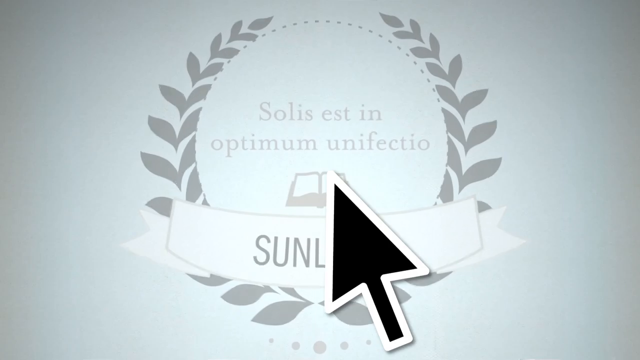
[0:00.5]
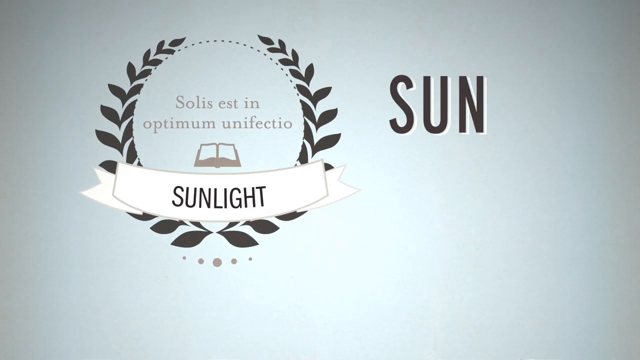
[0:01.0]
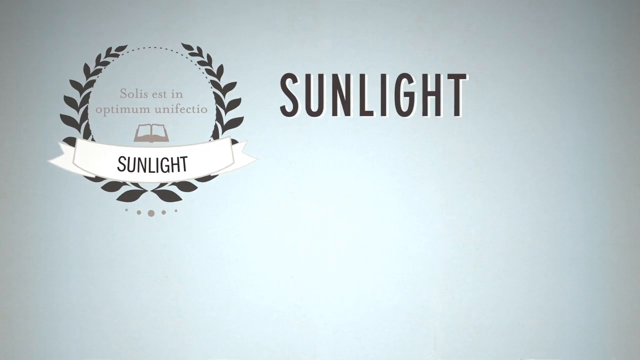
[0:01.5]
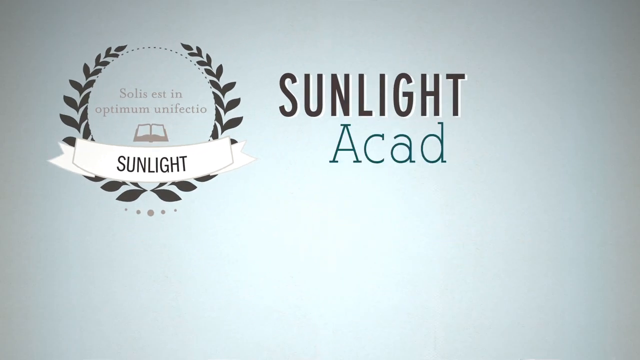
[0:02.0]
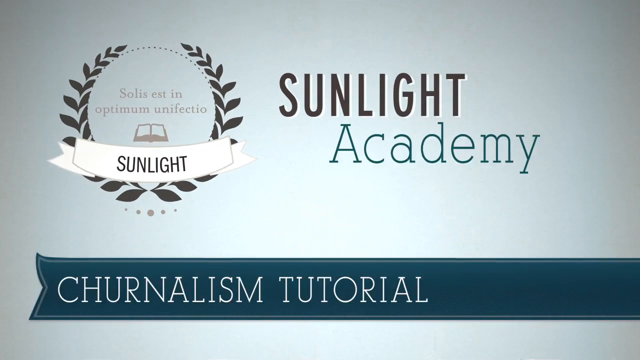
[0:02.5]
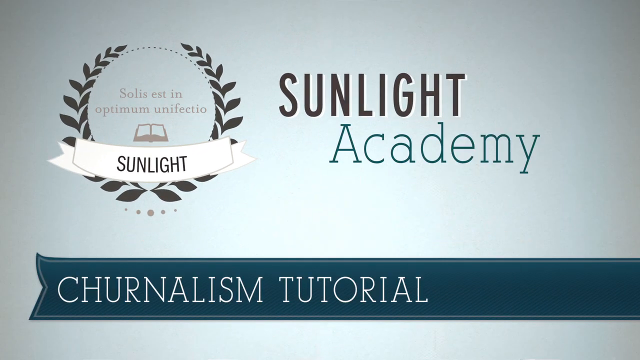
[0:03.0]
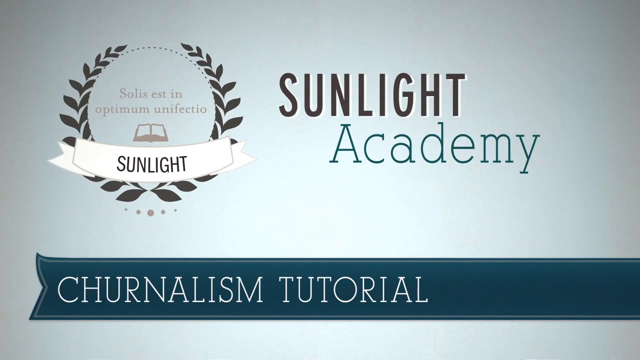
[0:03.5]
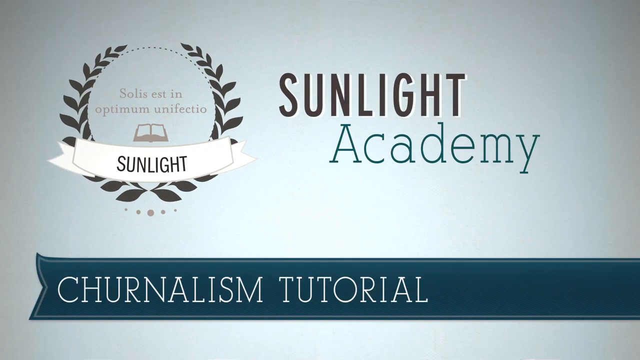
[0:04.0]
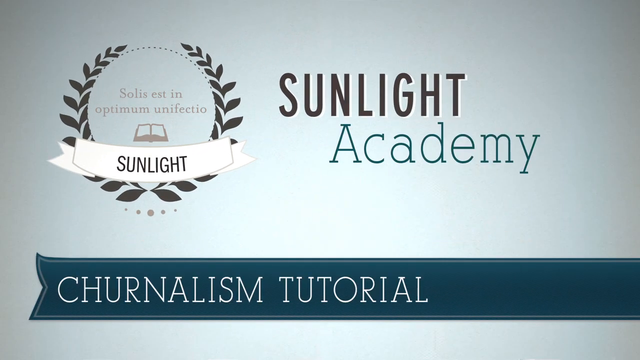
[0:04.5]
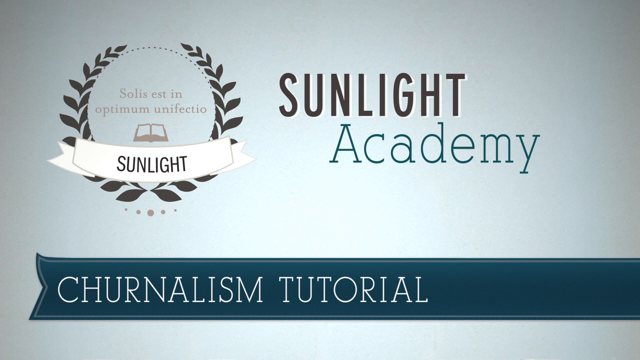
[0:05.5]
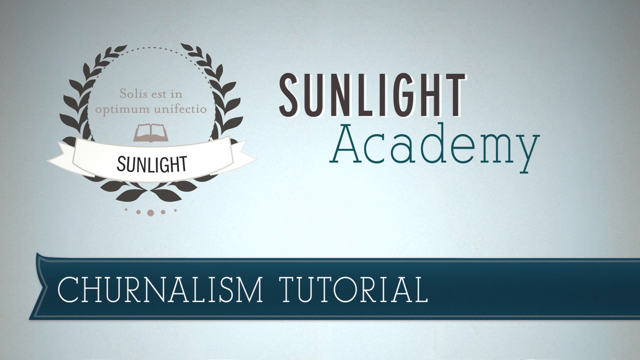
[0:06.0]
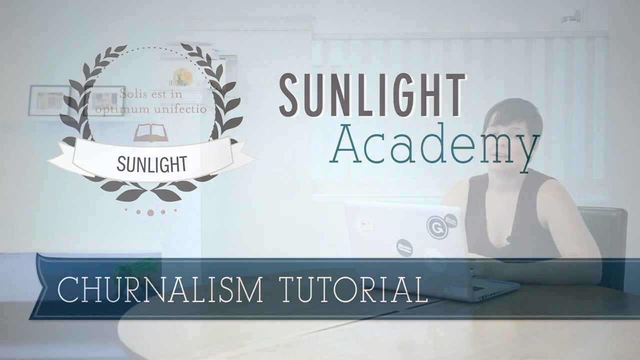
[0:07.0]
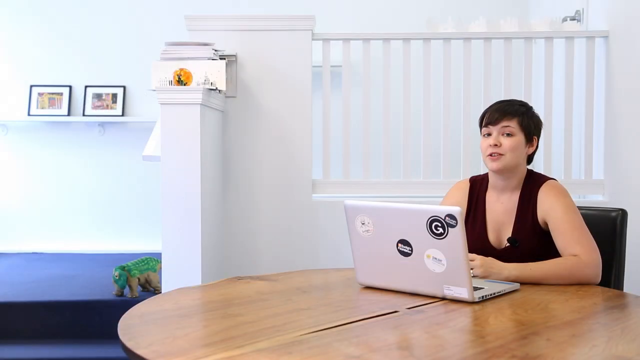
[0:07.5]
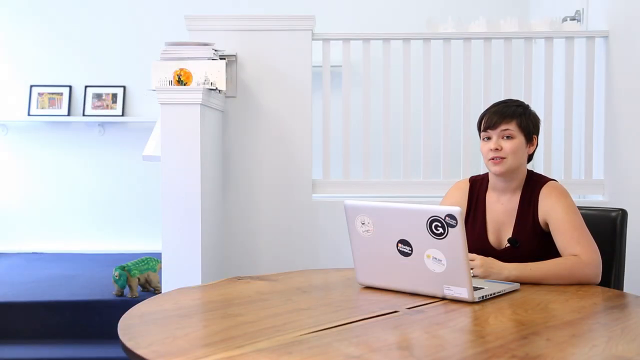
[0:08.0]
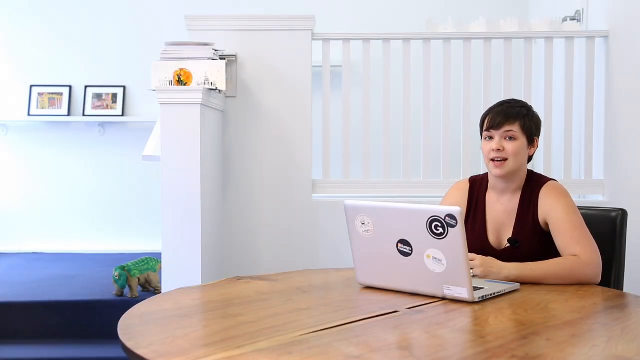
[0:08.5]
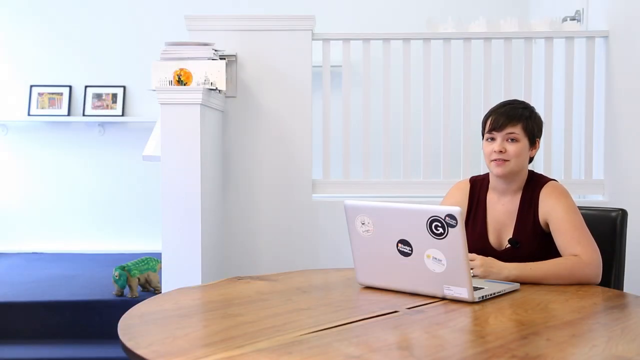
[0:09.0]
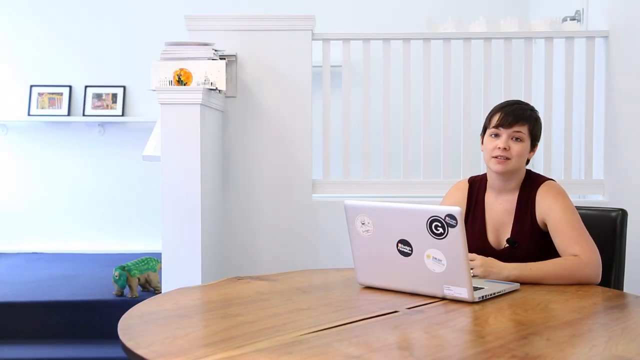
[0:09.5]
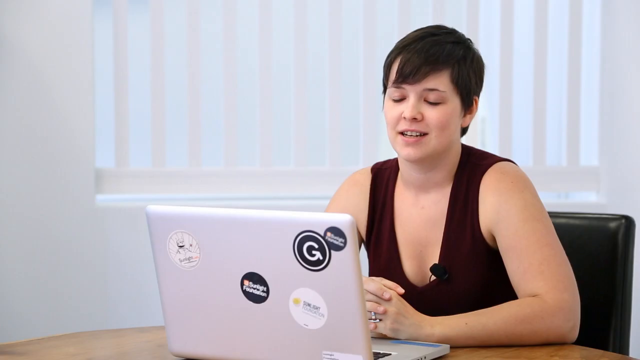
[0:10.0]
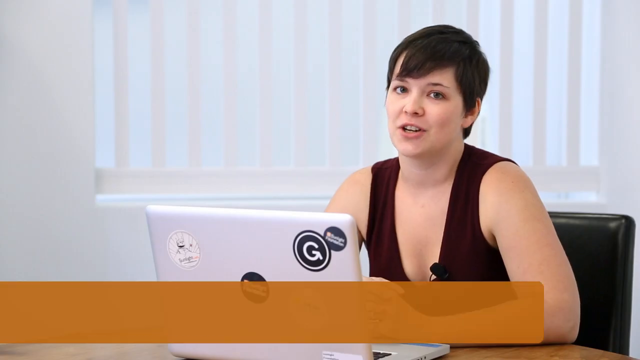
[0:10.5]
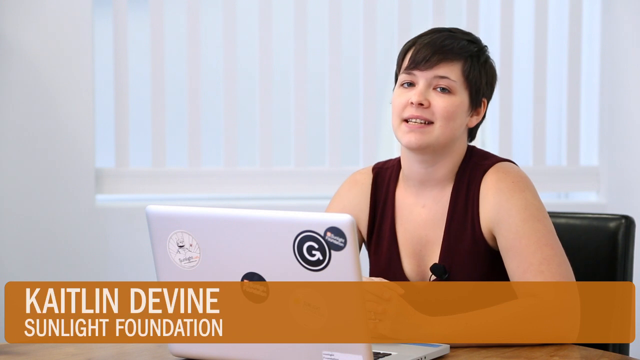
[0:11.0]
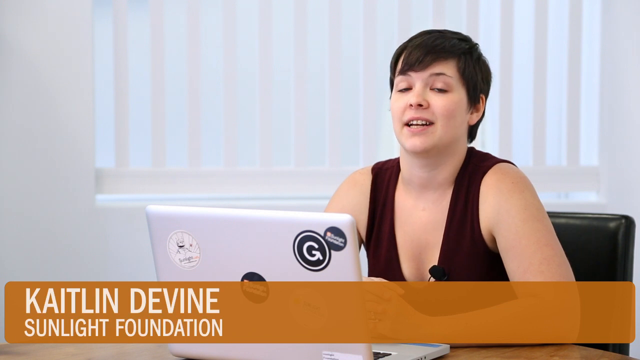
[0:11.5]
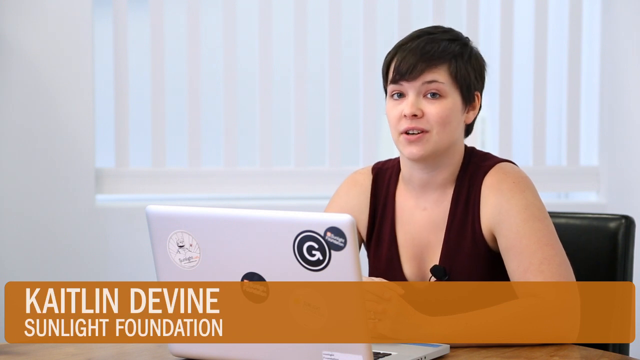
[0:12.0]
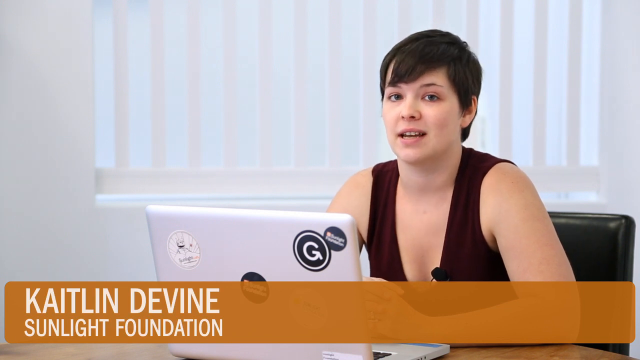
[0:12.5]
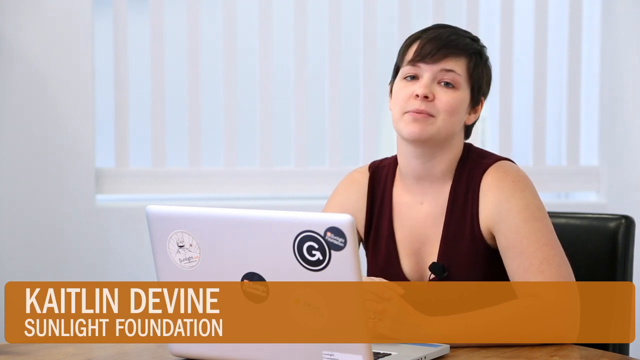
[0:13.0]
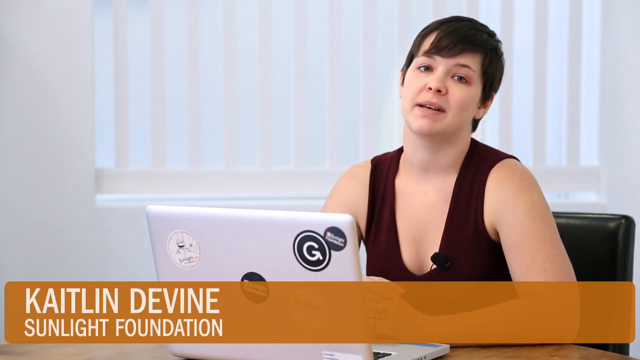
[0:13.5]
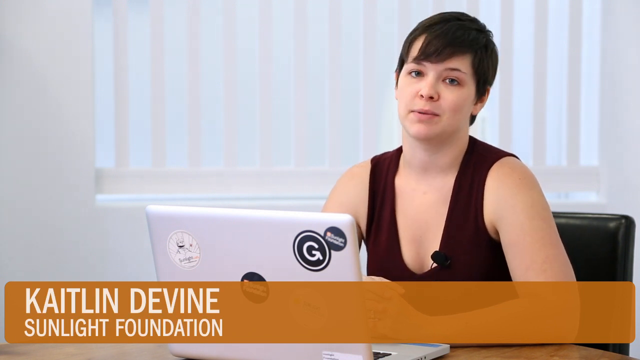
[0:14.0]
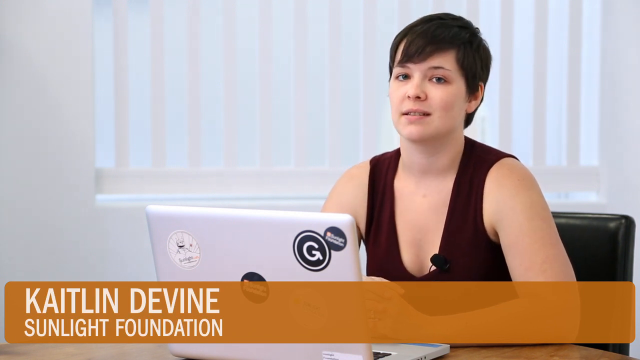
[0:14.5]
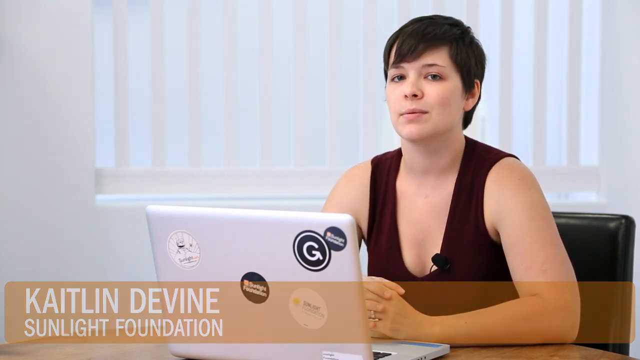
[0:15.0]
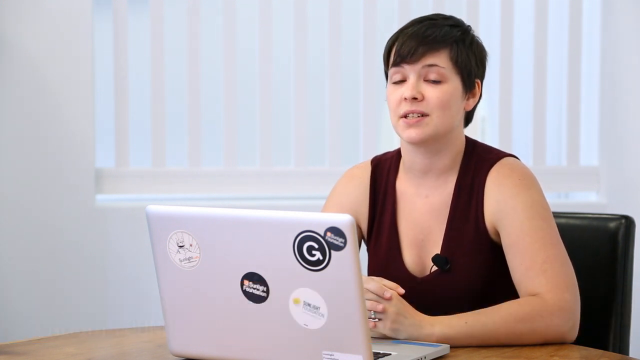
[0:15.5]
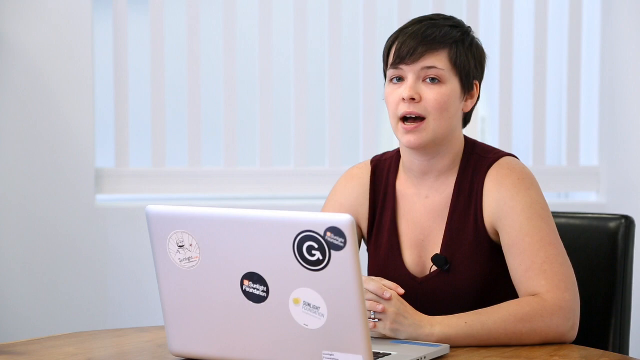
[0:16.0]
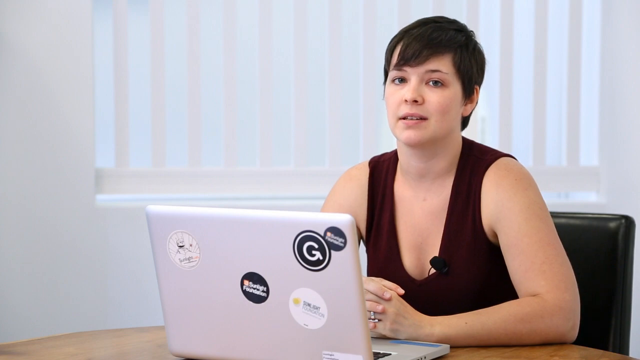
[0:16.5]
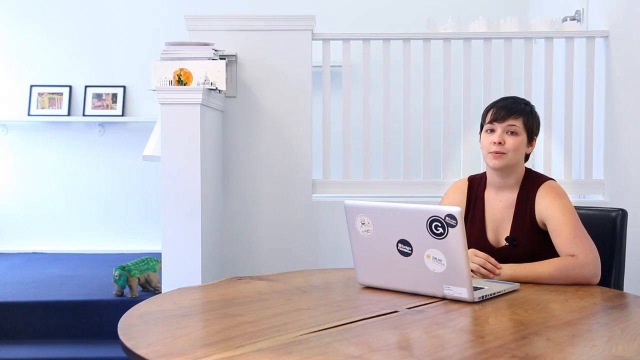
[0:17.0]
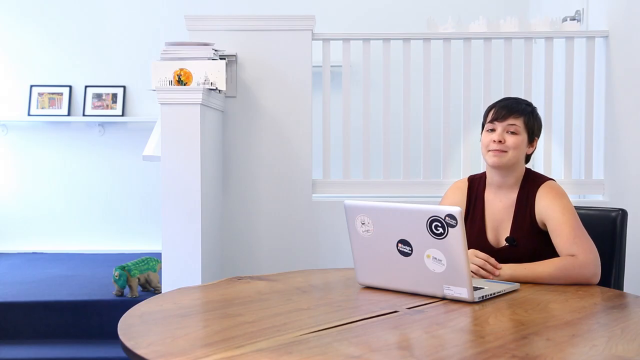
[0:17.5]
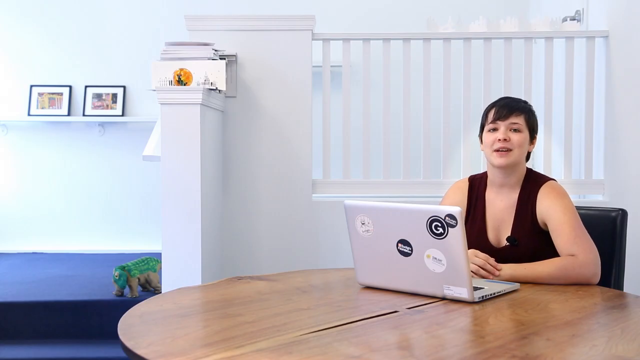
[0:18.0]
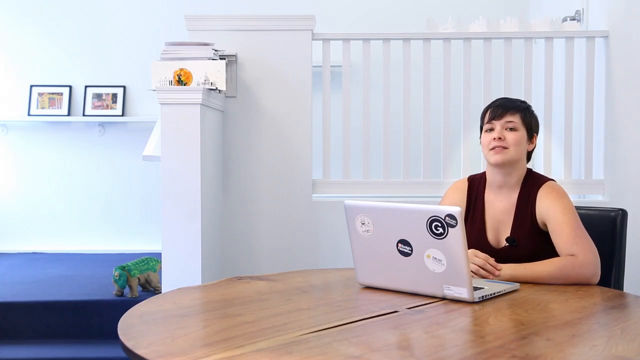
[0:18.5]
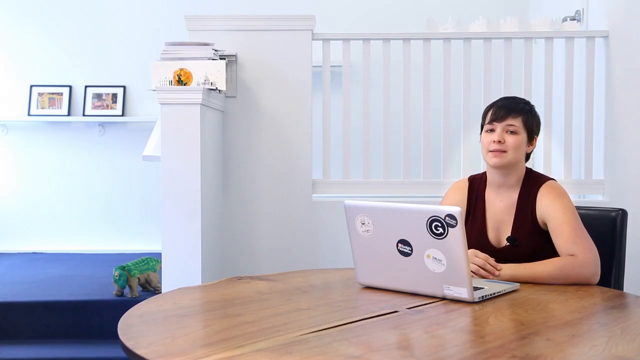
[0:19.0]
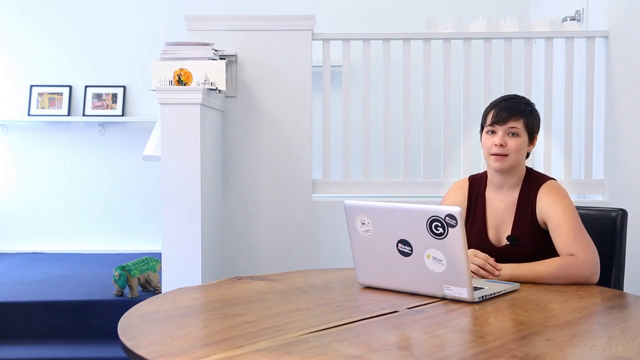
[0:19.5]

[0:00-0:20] The video opens on a presentation that says "Sunlight Academy." There is an icon, or what seems to be an insignia, that says "sunlight" within a banner, with something like a wreath around it and a book highlighted inside. At the bottom, in a banner that is something like turquoise, it says "Journalism Tutorial." The view then pans over to a lady sitting at a table that looks wooden. She is a white woman who looks to be in her thirties, with short hair that does not reach her shoulders. On-screen text identifies her as "Kaitlyn Devine, Sunlight Foundation." Her laptop is open and is silver. The setting looks like a home: there is something like a railing around her and a small landing, with some photos or pictures hanging on the wall right by the landing, and the space is brightly lit like a house.